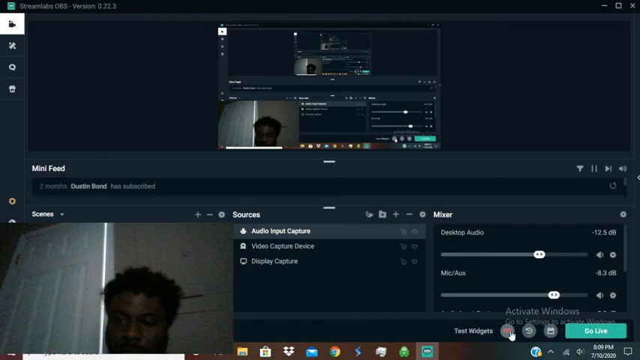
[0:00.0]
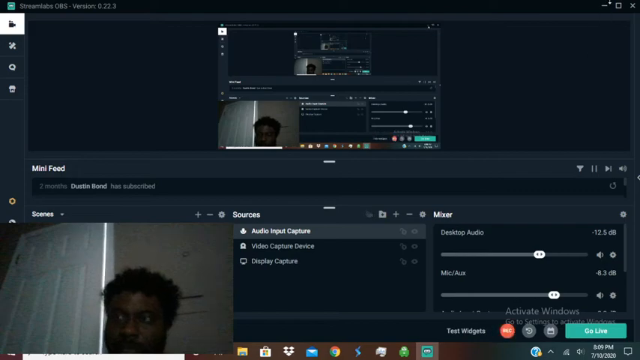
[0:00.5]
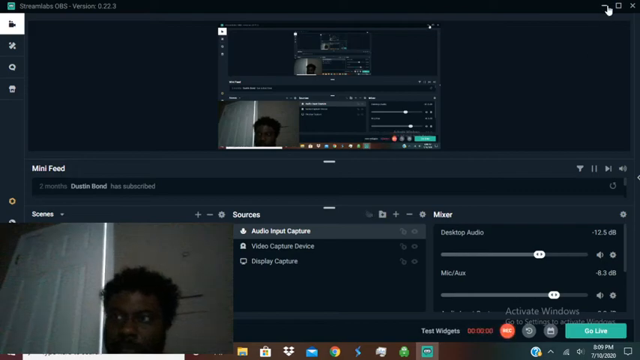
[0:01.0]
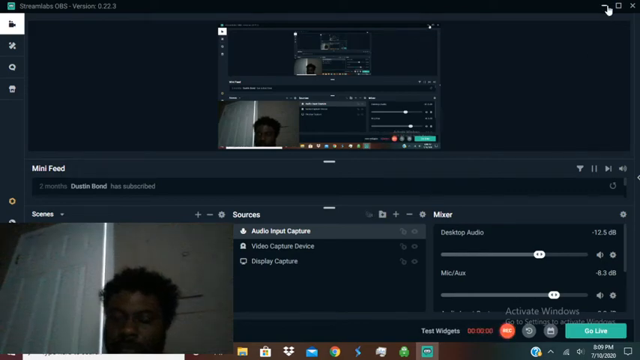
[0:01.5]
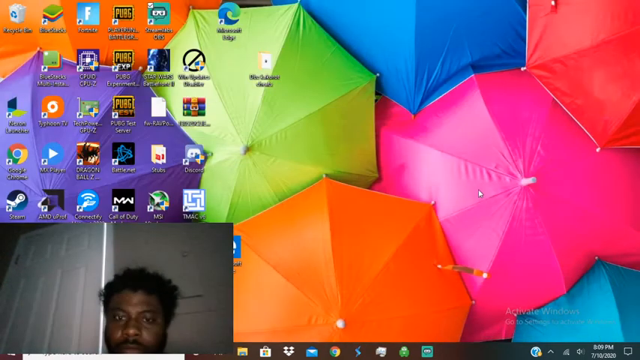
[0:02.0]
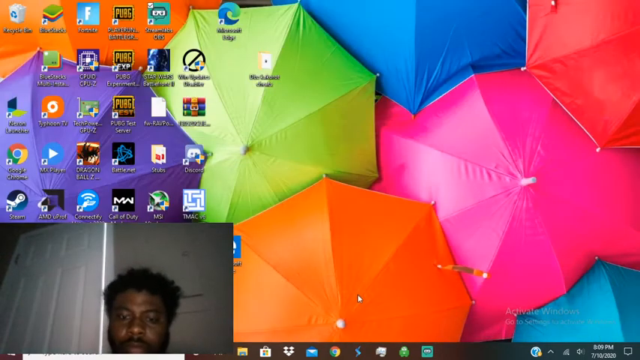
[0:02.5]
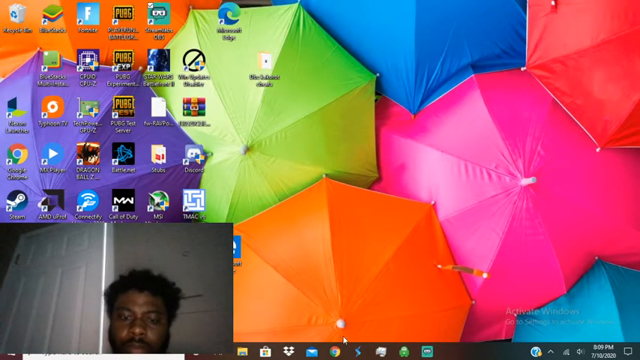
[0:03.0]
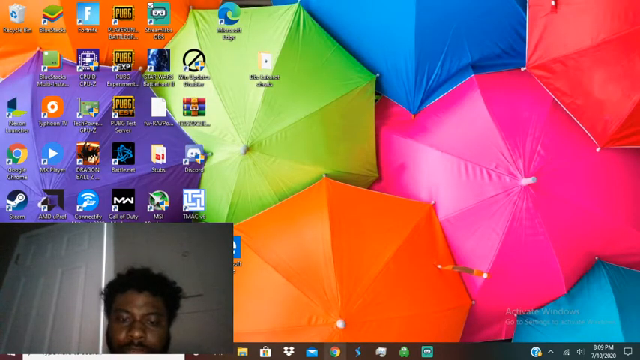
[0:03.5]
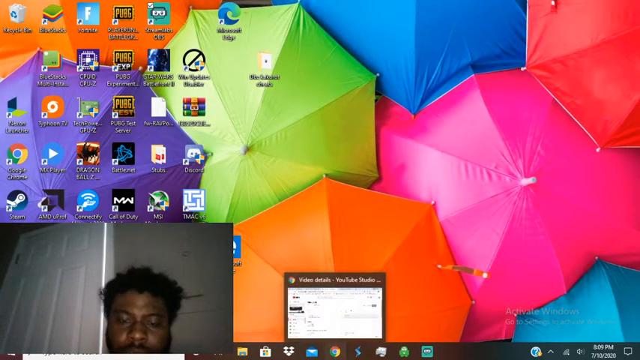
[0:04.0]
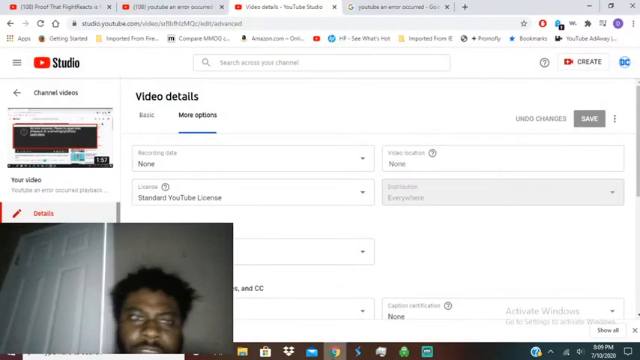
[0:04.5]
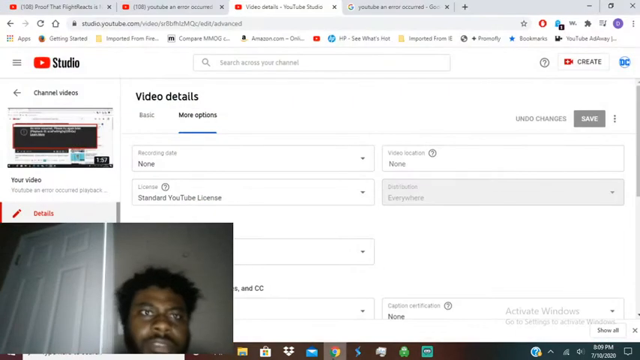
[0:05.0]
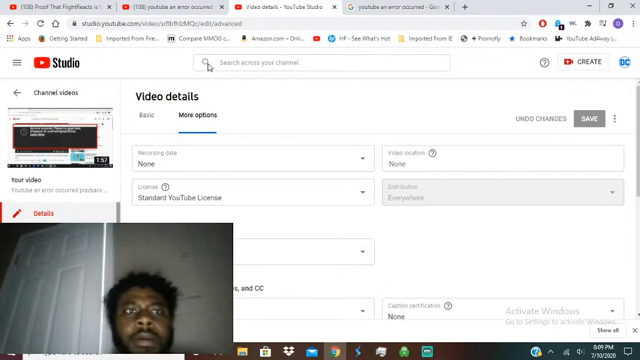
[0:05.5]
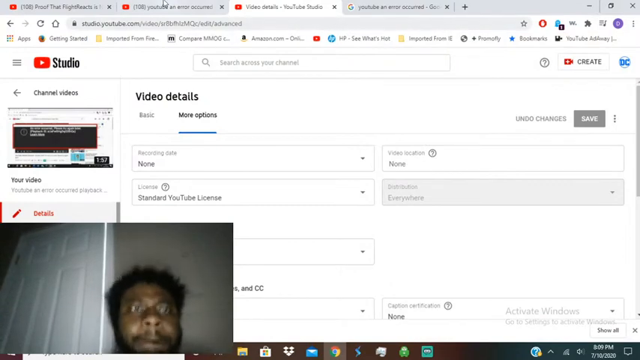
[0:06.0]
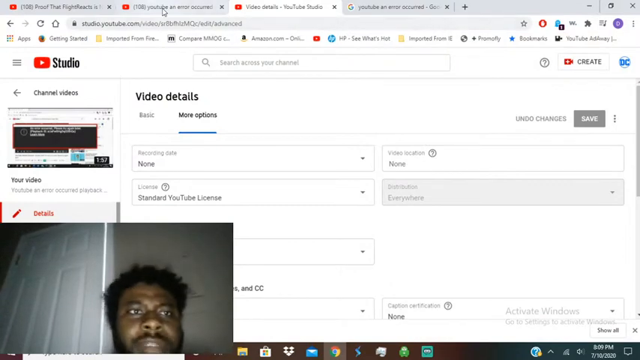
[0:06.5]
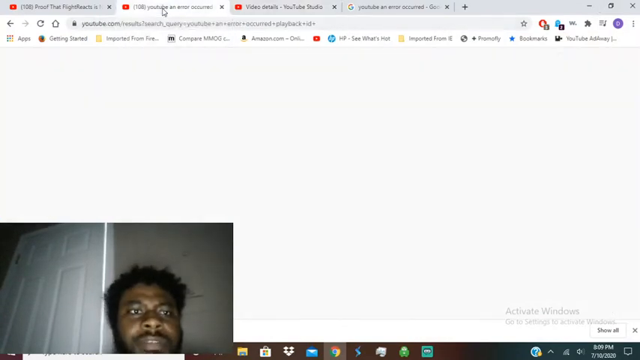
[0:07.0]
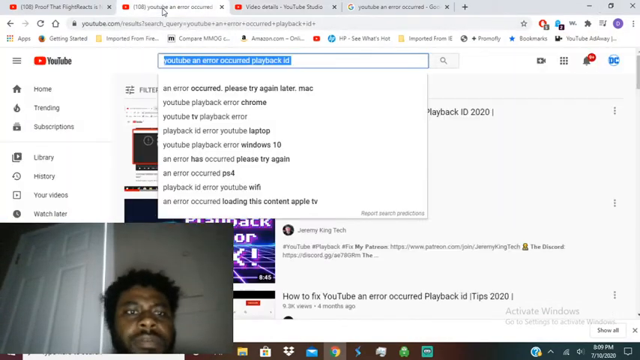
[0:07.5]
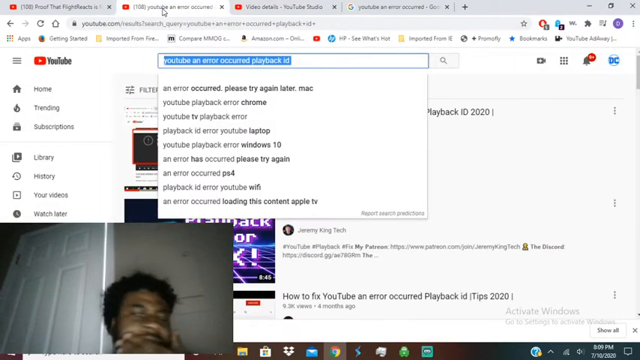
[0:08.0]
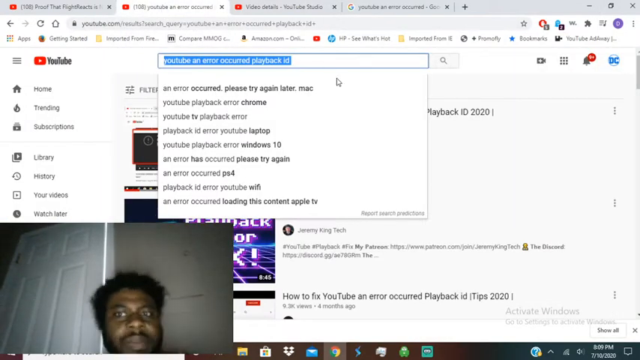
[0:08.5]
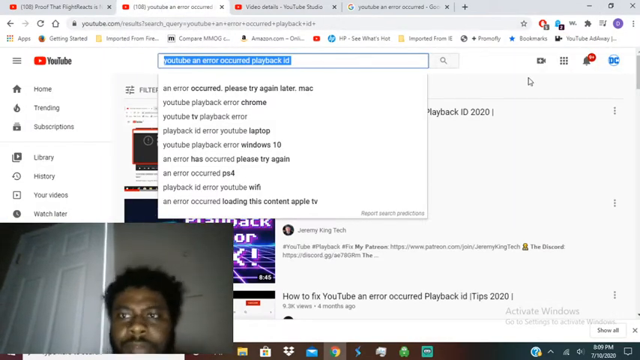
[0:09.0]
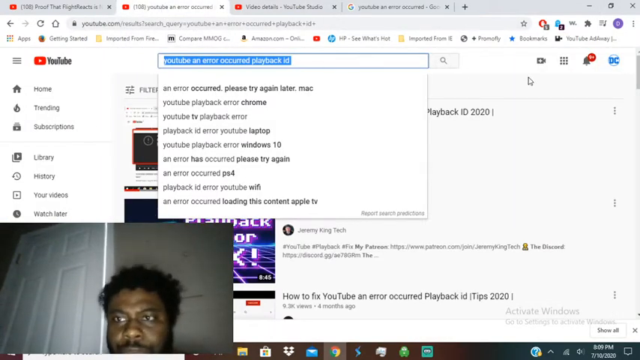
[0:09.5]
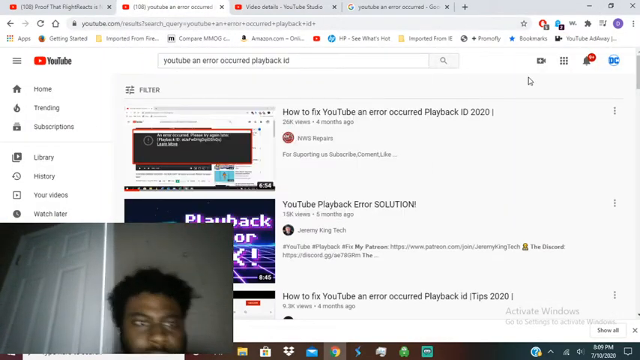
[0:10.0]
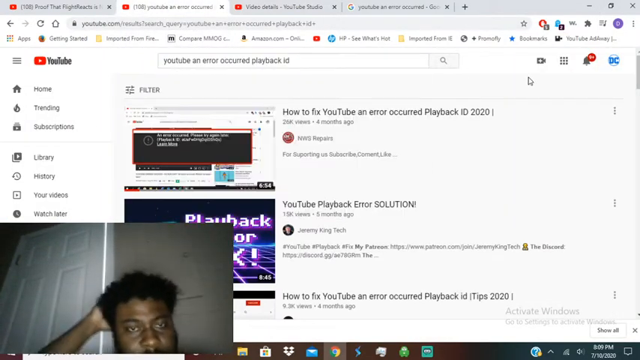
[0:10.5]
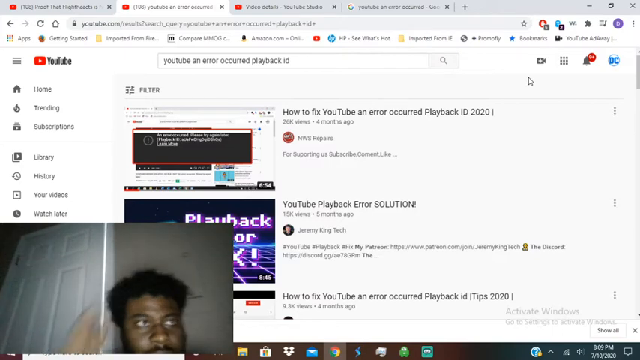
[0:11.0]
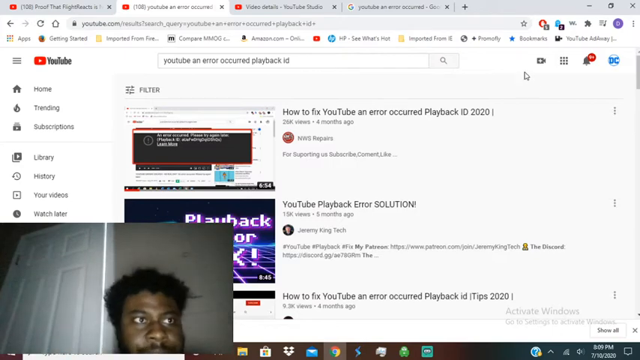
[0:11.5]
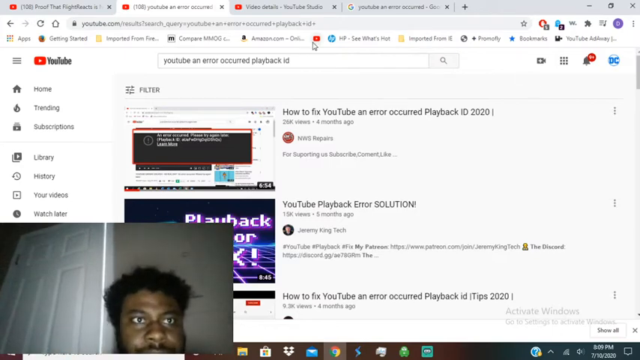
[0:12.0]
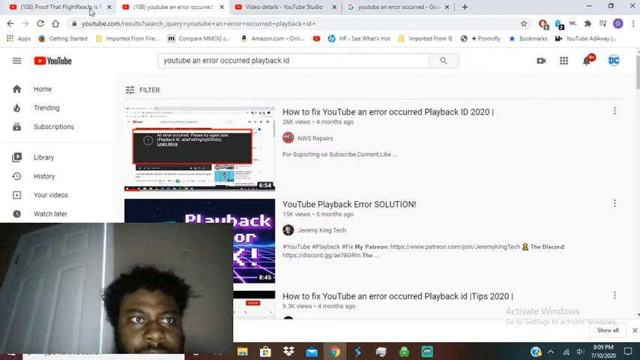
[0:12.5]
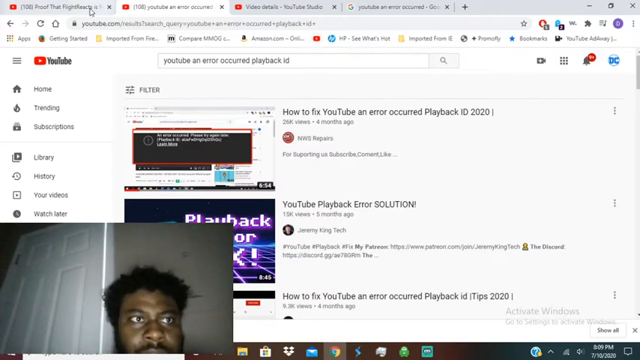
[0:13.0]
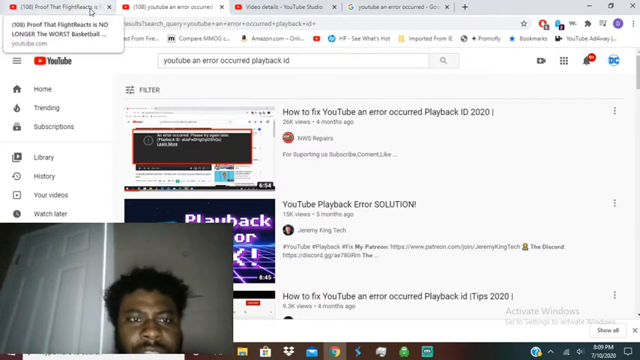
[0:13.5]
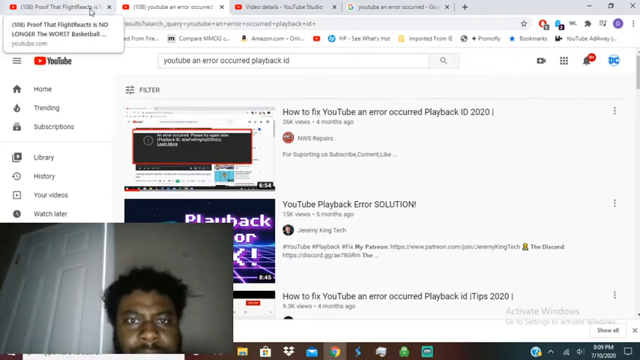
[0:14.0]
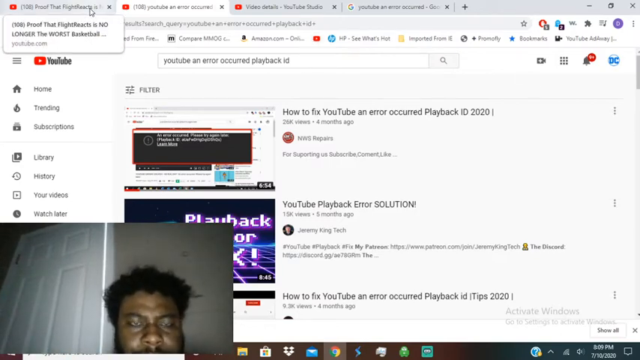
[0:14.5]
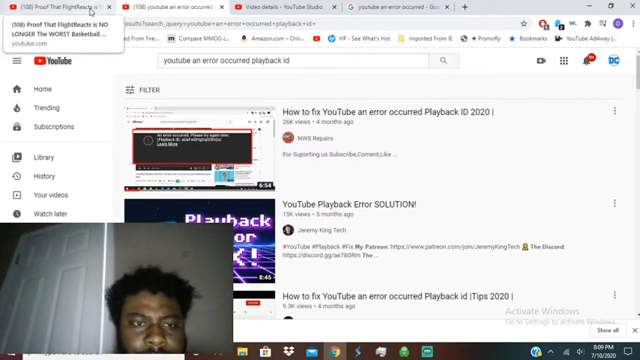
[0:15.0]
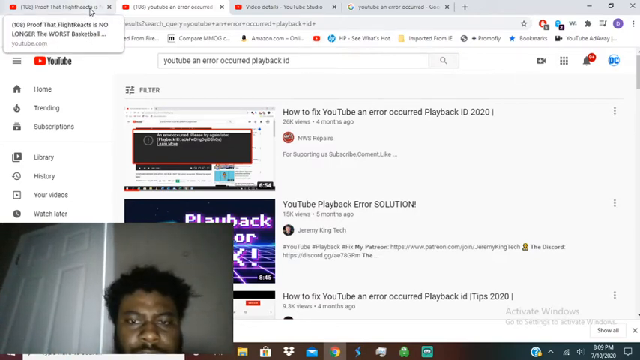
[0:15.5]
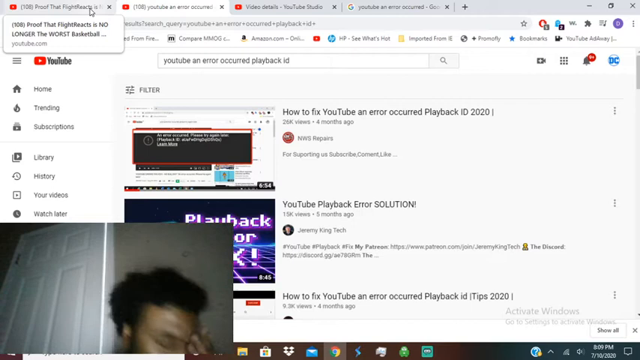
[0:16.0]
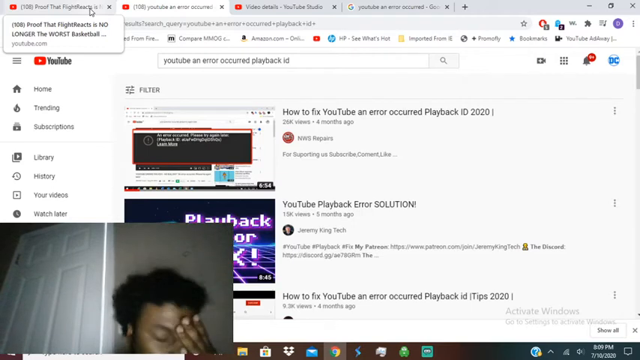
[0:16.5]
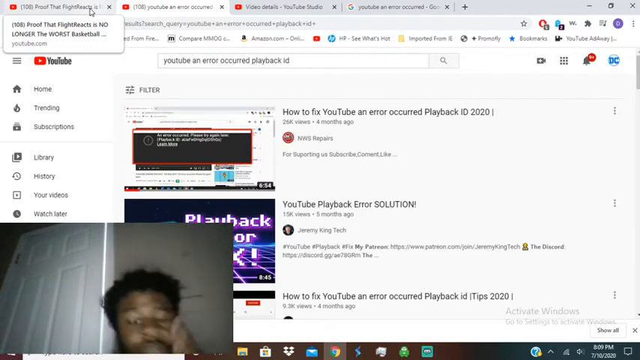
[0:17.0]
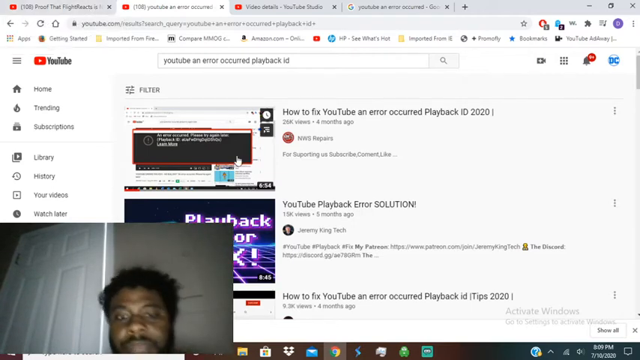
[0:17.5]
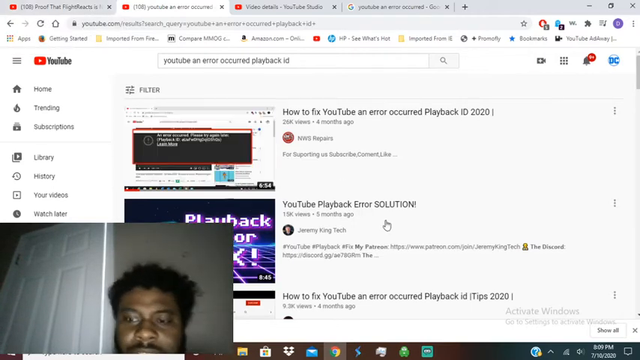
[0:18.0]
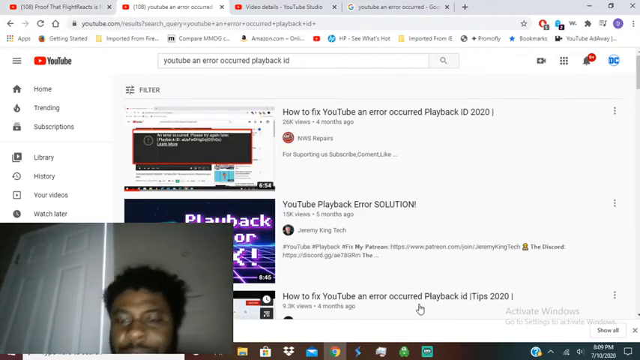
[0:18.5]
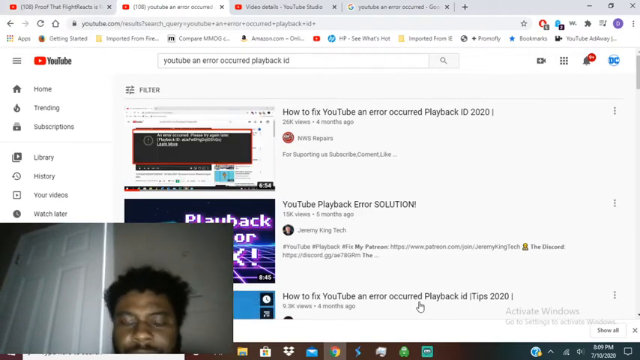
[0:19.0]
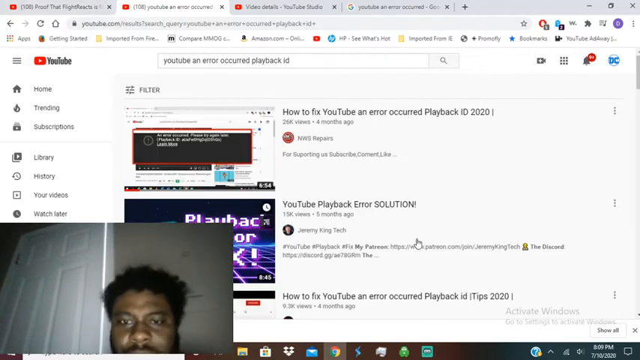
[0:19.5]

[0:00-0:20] A toolbar is on the left, and the body of the screen is dark gray to light grayish. A video appears in three portions, showing a man sitting down who is visible only from the chin up. The page is for fixing a video, and audio mixing capabilities and audio input capture are visible. The man is live. He closes that page, but his image remains at the bottom left of the screen, along with his desktop, which shows multiple tops of umbrellas in different vibrant colors and a lot of shortcuts. He then brings up a studio video page. Four tabs are now open, and the tab he is on is YouTube, for an error occurred playback ID. He moves his cursor around, looks confused, scratches his head and rubs his chin. He goes to another tab but does not click on it, then clicks on a how-to-fix video.